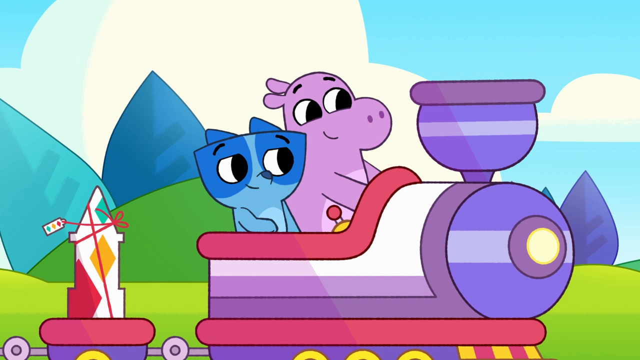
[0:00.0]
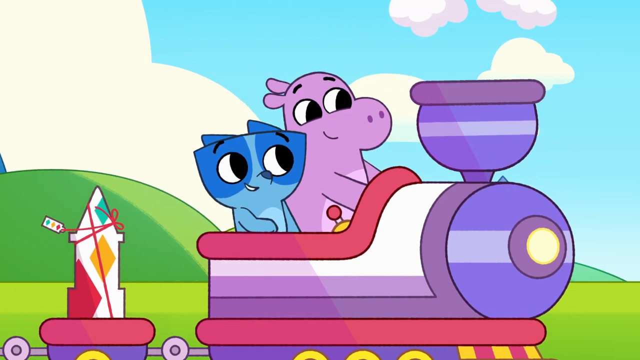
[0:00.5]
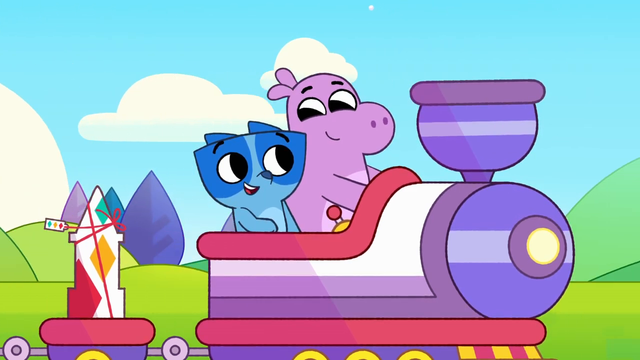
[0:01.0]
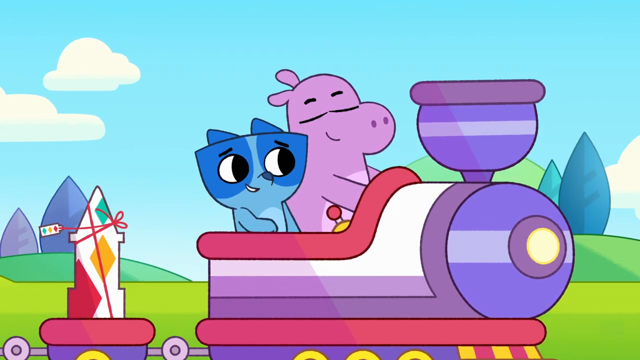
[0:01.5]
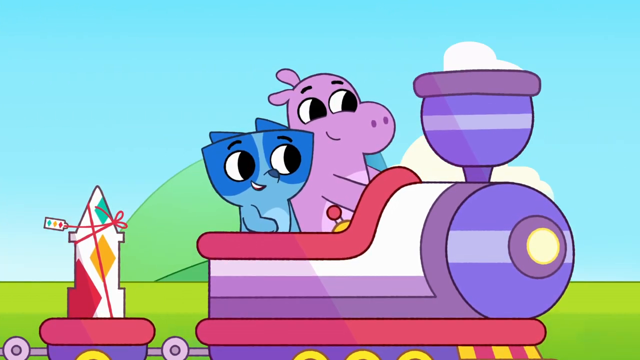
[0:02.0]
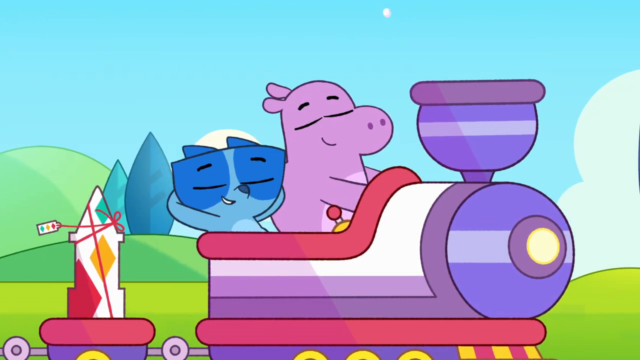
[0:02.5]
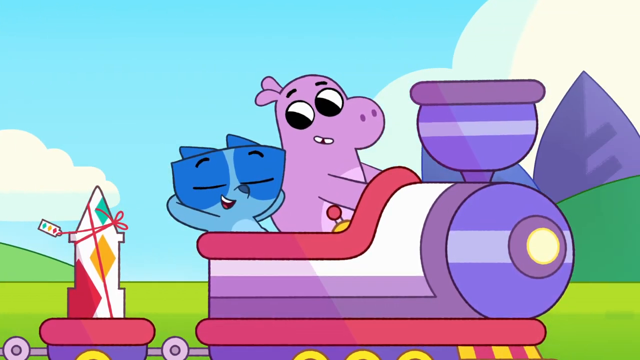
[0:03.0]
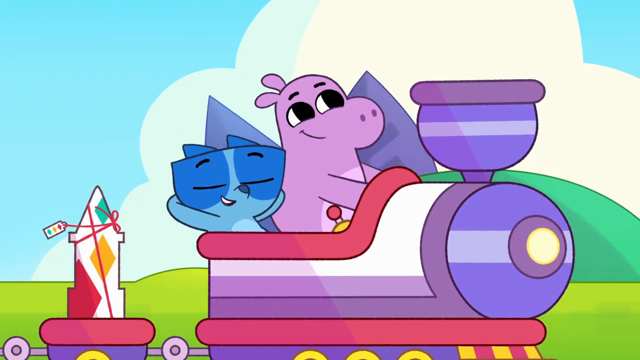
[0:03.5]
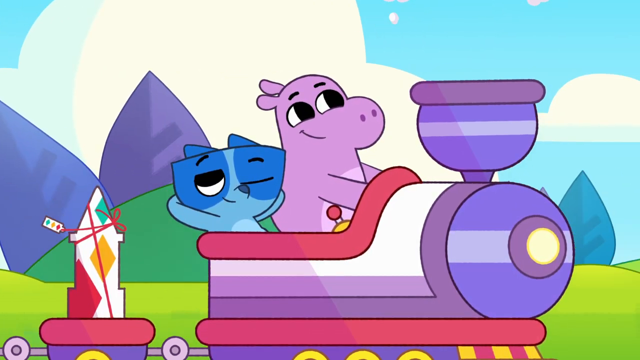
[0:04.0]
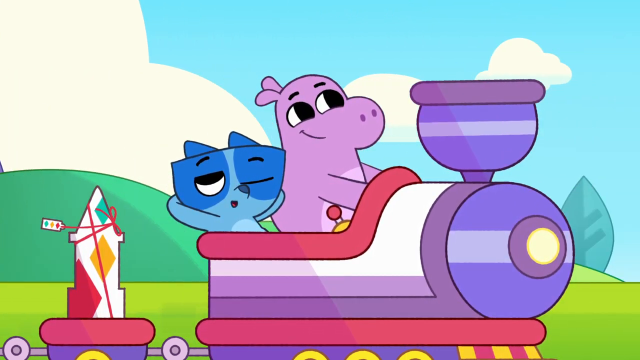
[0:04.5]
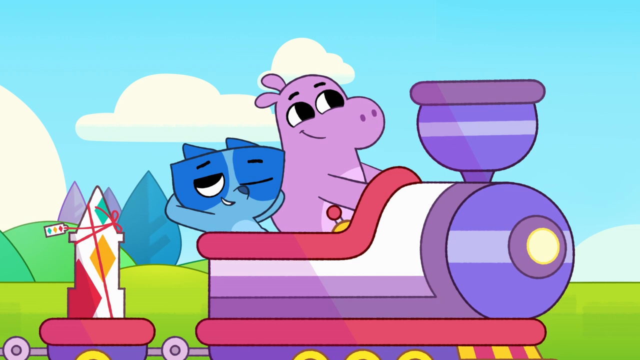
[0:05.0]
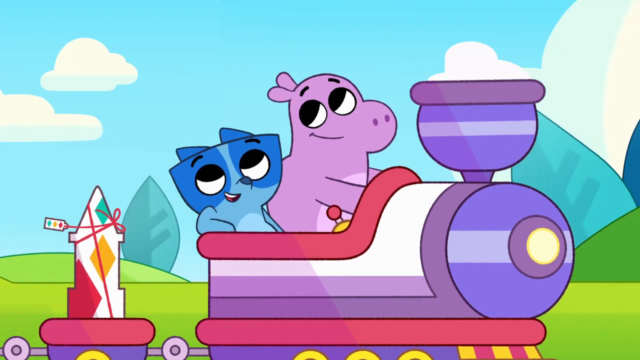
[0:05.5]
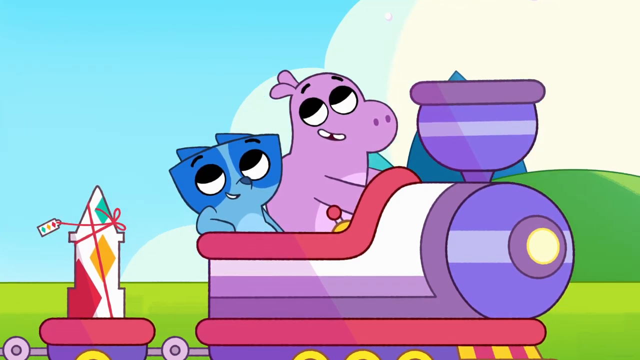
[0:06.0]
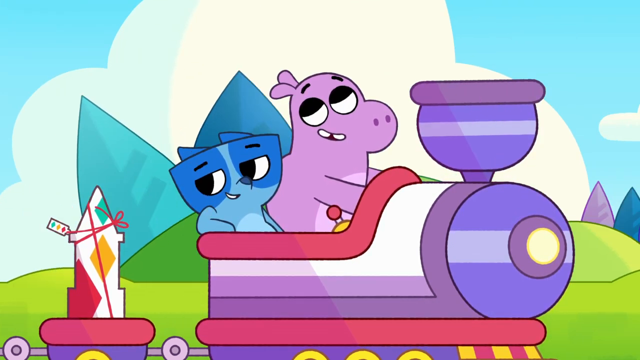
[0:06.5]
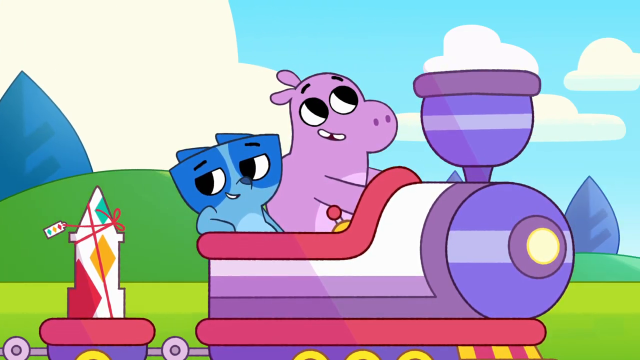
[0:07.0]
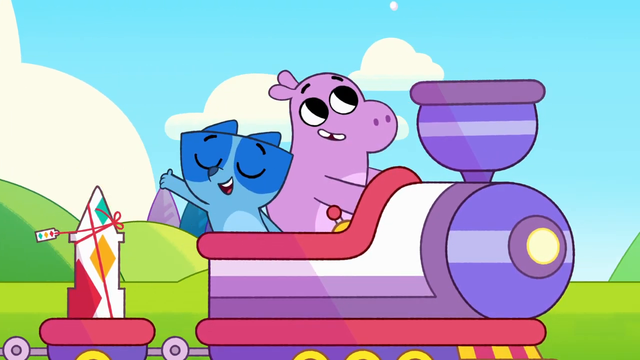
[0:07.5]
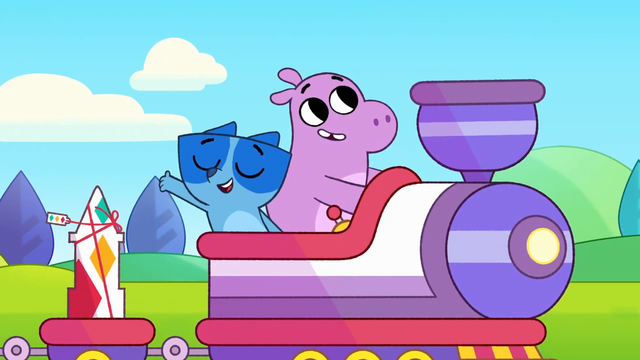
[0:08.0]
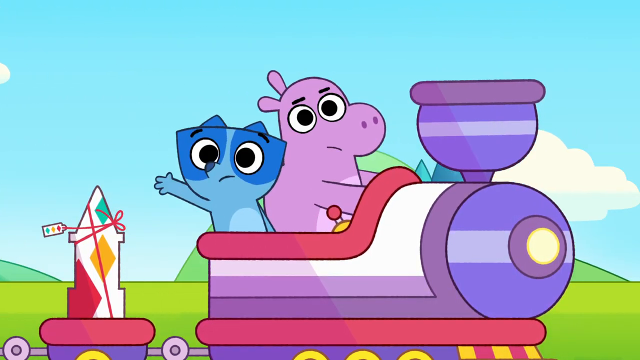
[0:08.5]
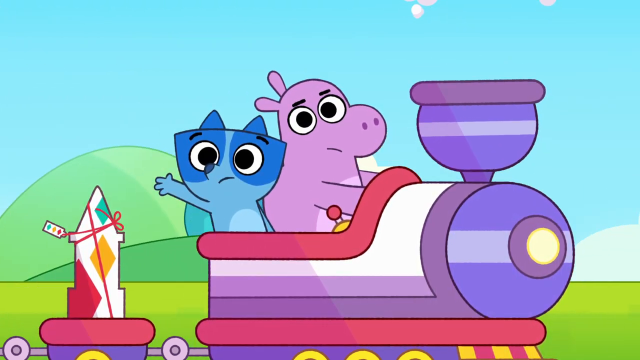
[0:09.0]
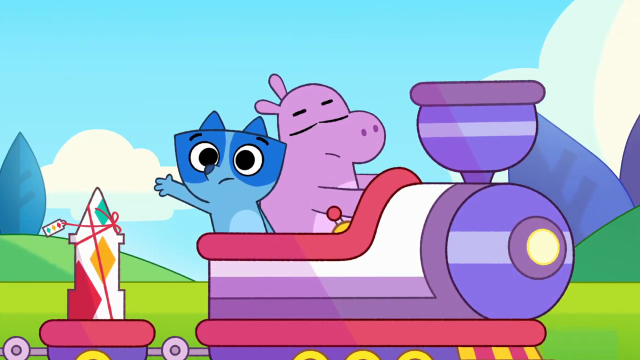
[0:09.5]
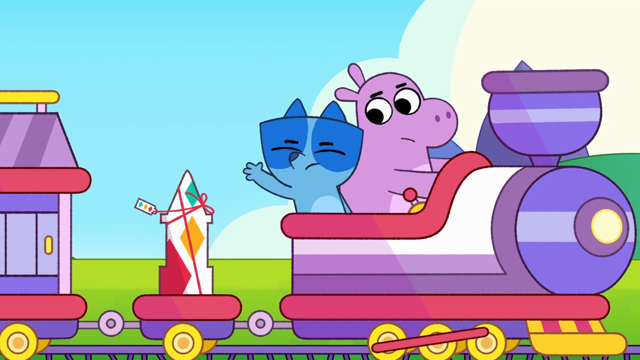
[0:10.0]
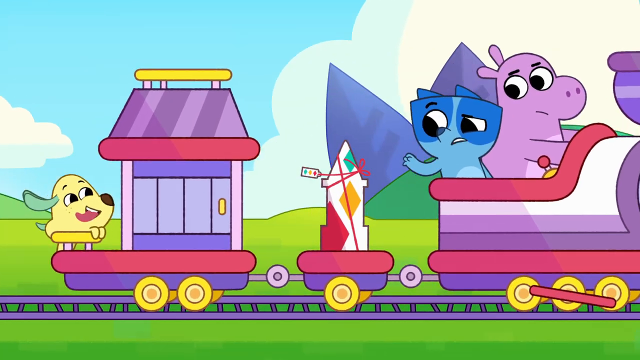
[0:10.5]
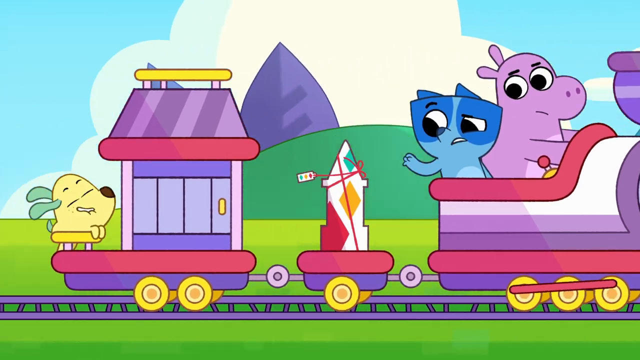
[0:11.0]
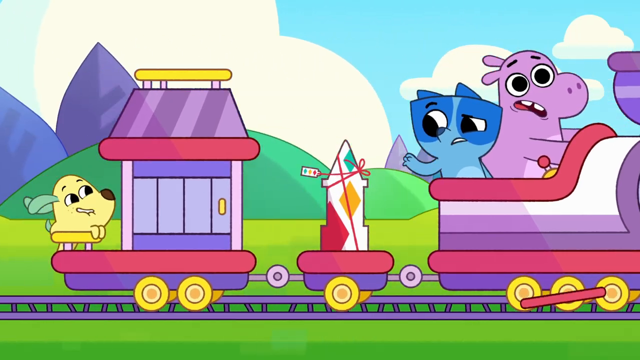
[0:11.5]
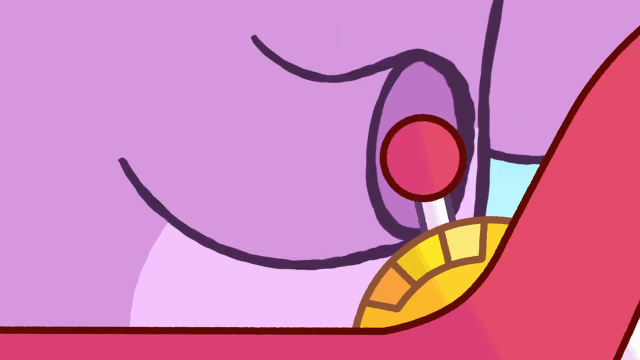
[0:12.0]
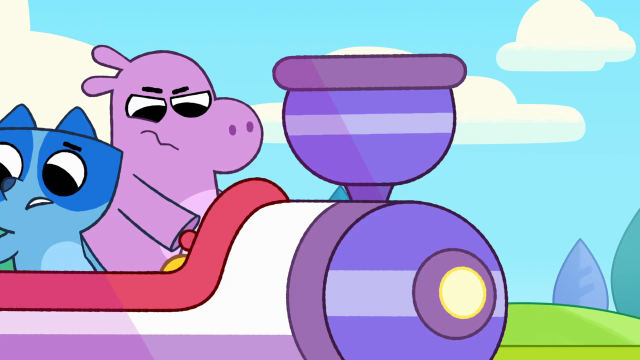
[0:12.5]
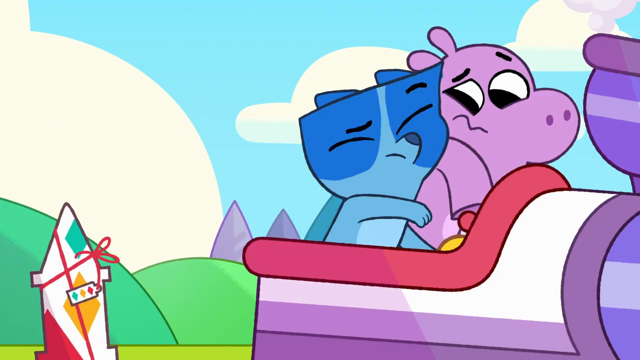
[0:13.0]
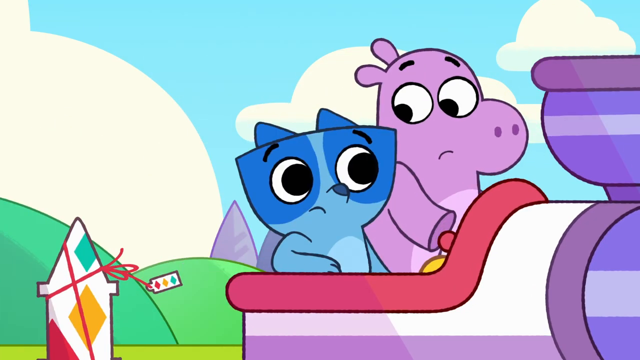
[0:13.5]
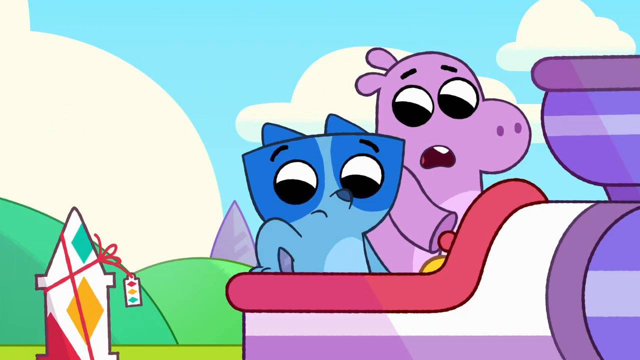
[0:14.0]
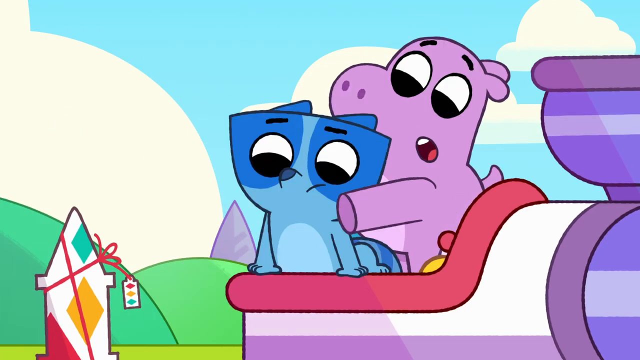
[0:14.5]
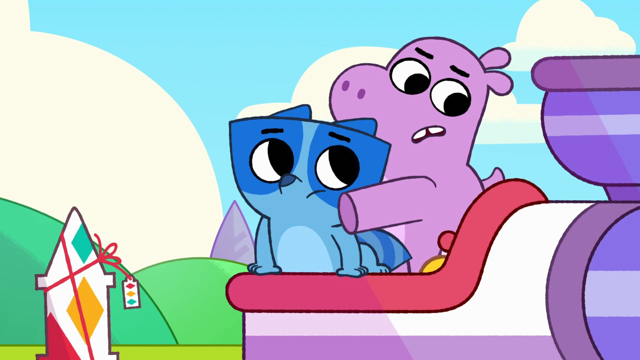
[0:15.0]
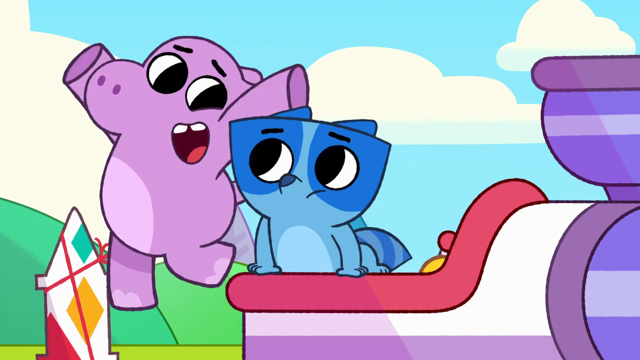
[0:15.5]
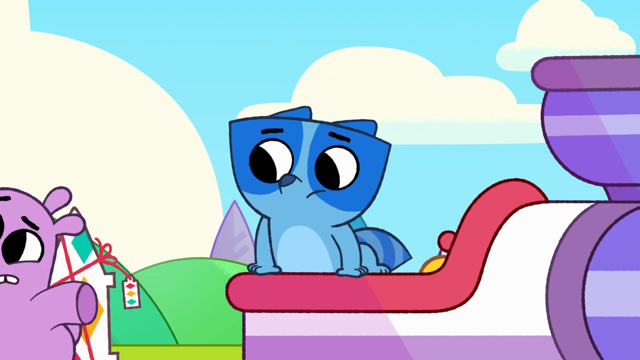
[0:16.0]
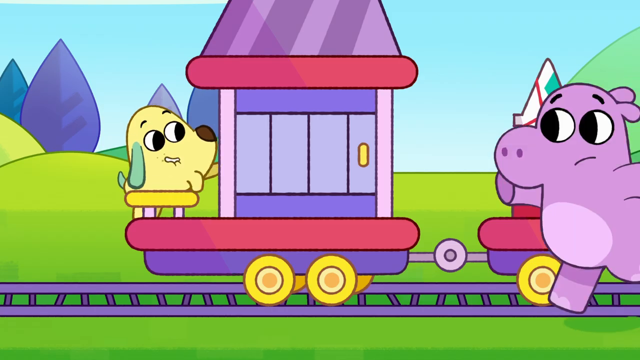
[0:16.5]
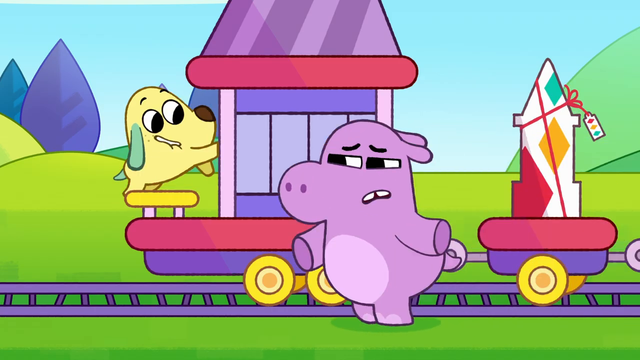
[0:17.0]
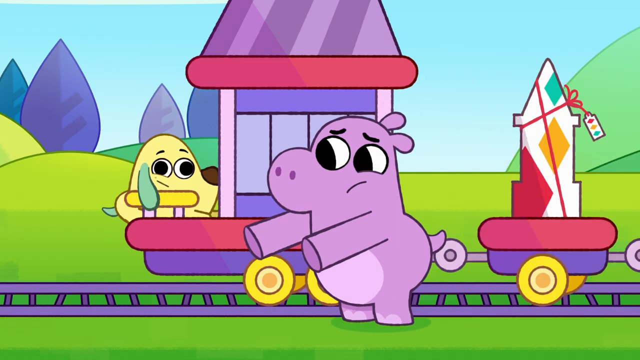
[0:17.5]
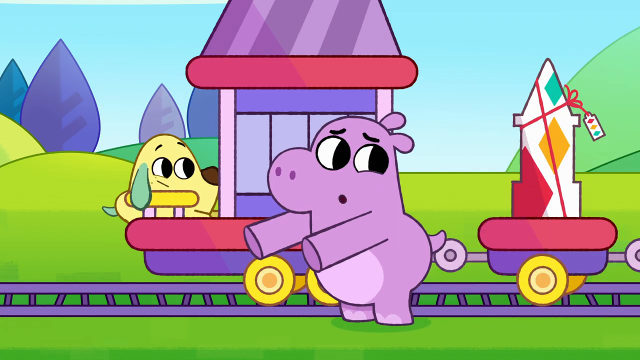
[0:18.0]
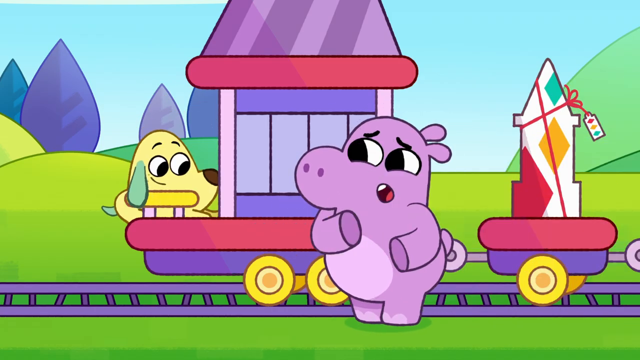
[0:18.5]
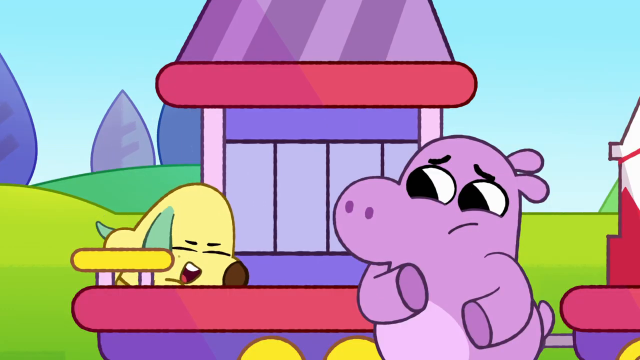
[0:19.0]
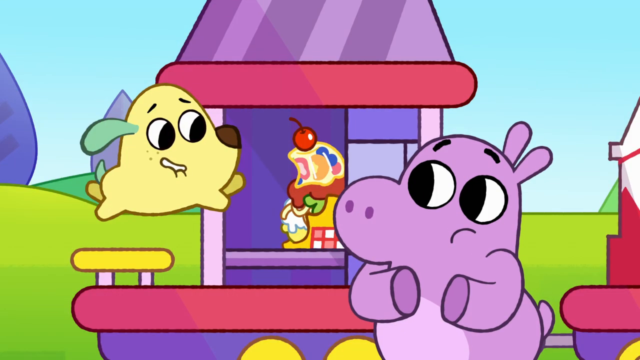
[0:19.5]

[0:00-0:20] Two friends ride on a small train: a purple hippopotamus and some kind of blue bear. They are happy and smiling. They are outside under a blue sky, with blue trees and green grass. The train is purple, blue, red and yellow, and everything is colorful. The train lets out steam. Then something happens: another friend appears, a yellow dog with long green ears. The hippopotamus and the bear look at him and are worried. The dog talks to them. They have to go get the dog, which apparently should not be there.